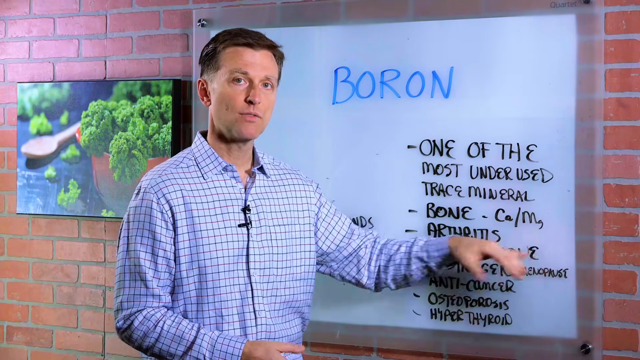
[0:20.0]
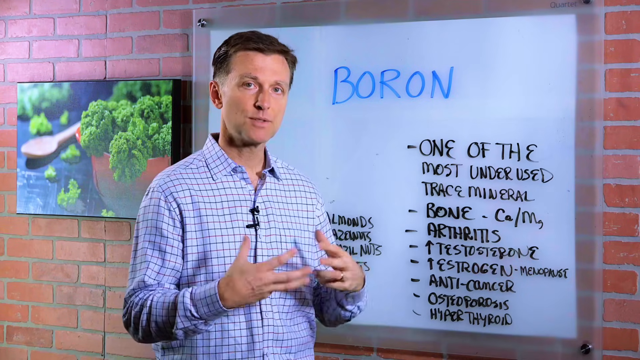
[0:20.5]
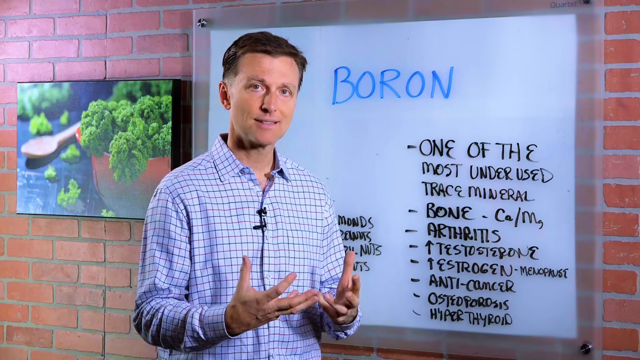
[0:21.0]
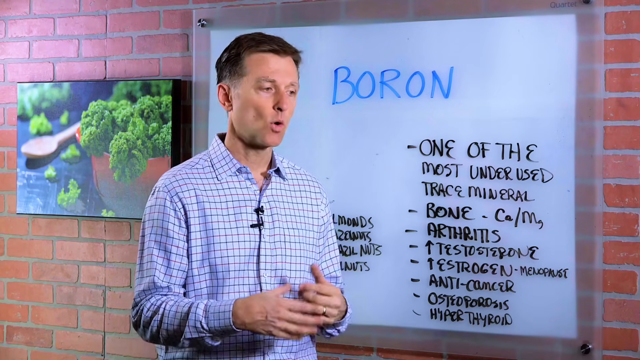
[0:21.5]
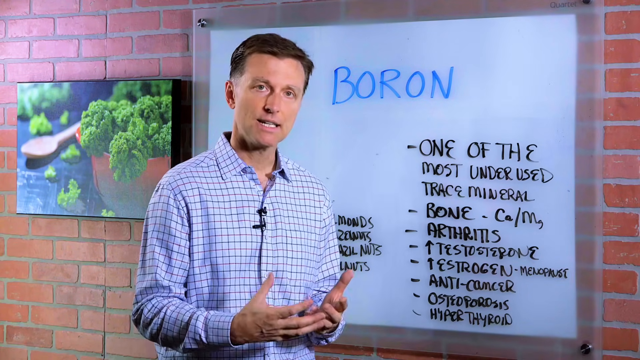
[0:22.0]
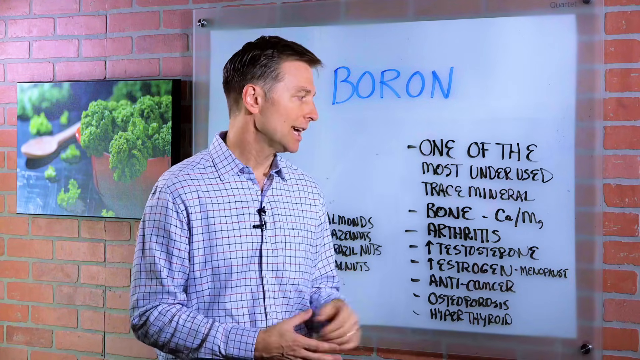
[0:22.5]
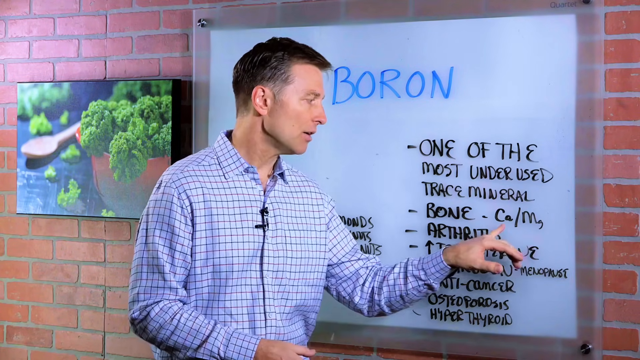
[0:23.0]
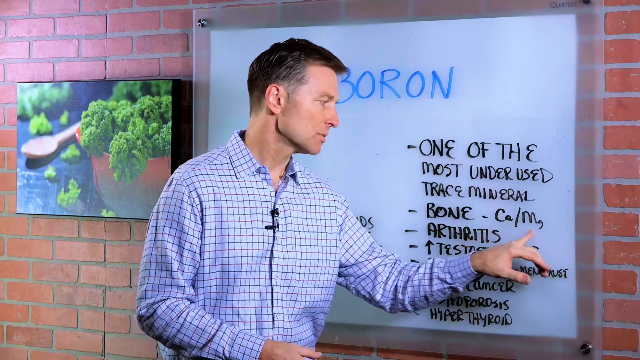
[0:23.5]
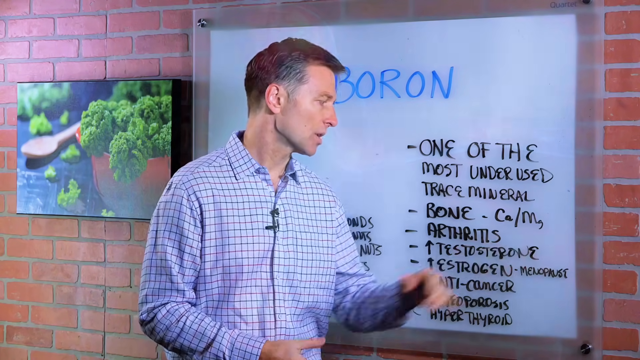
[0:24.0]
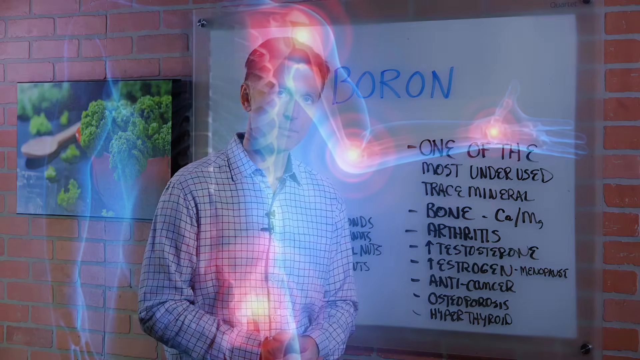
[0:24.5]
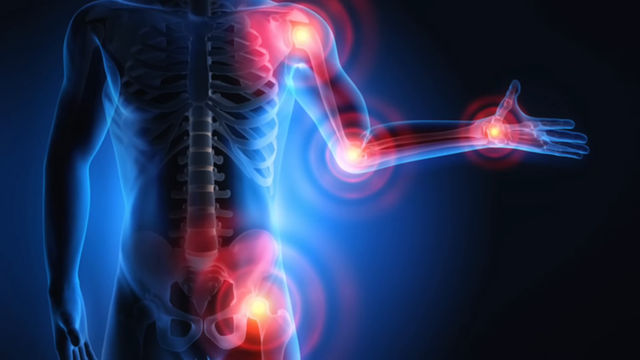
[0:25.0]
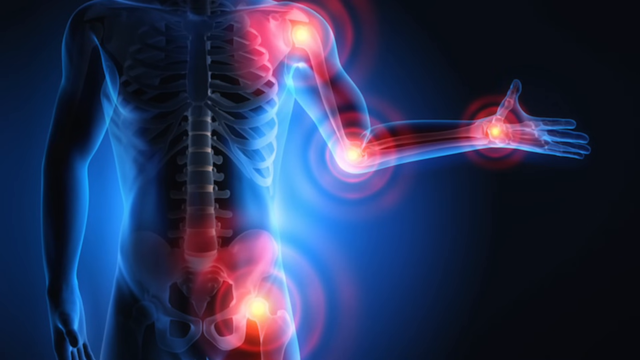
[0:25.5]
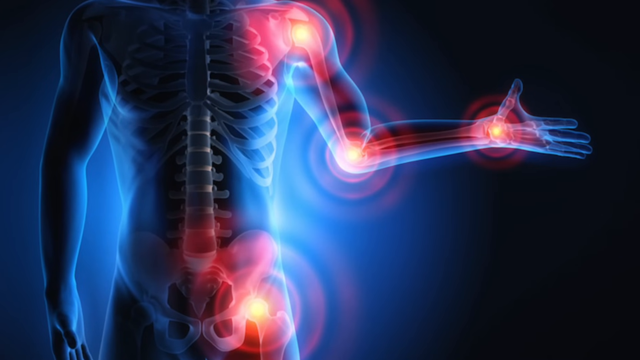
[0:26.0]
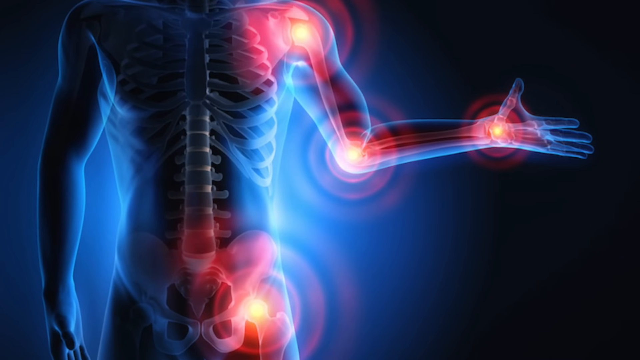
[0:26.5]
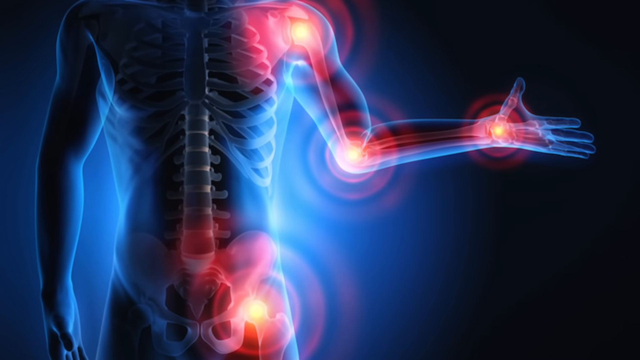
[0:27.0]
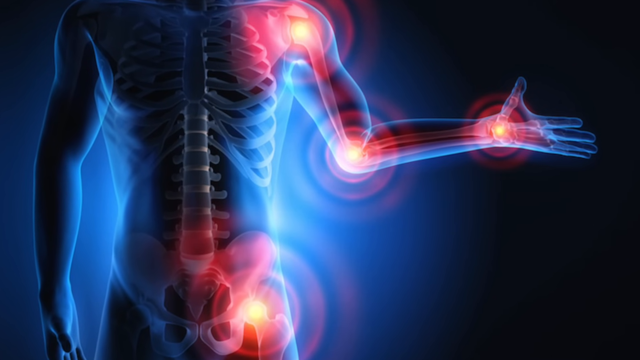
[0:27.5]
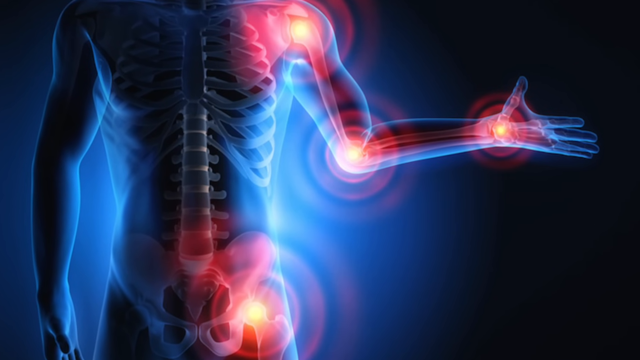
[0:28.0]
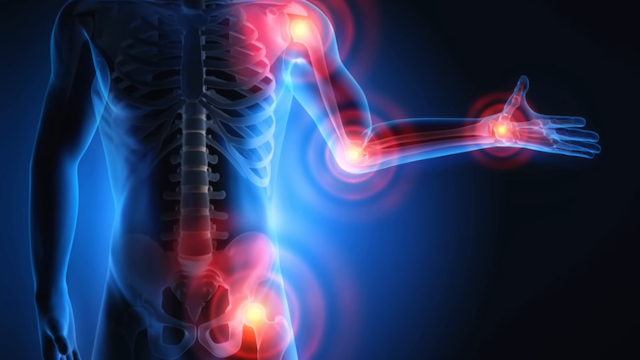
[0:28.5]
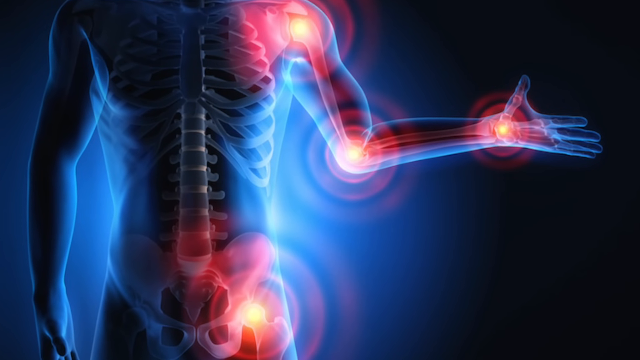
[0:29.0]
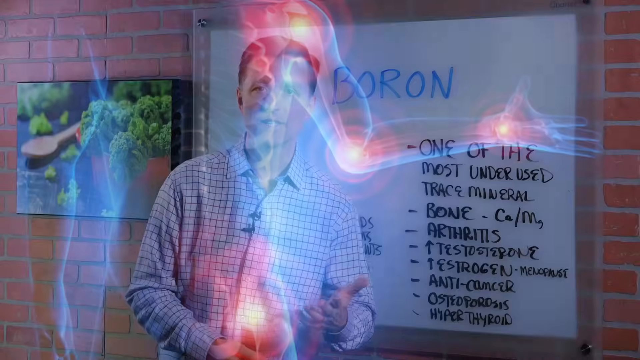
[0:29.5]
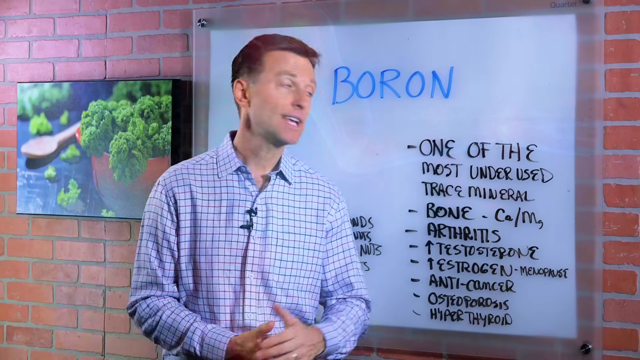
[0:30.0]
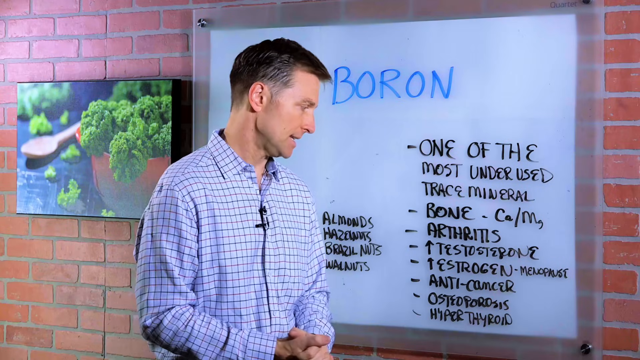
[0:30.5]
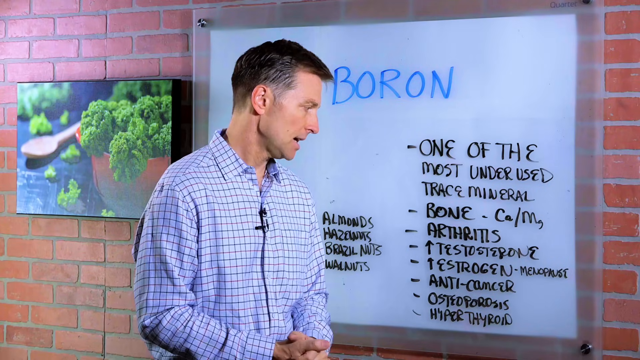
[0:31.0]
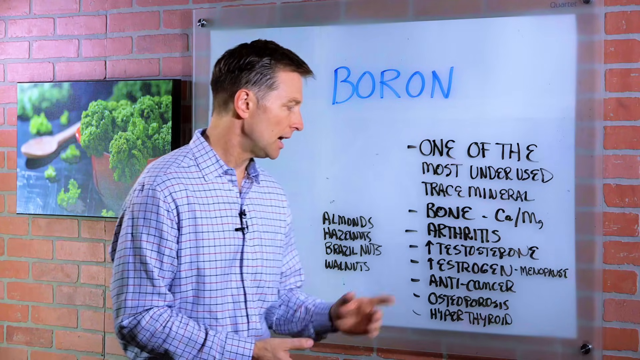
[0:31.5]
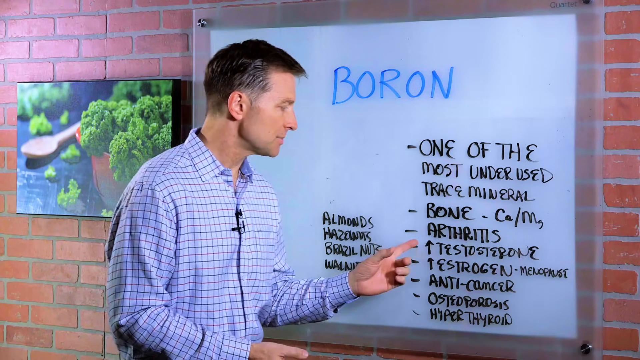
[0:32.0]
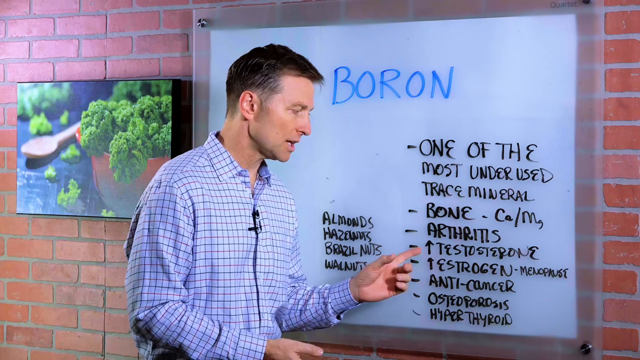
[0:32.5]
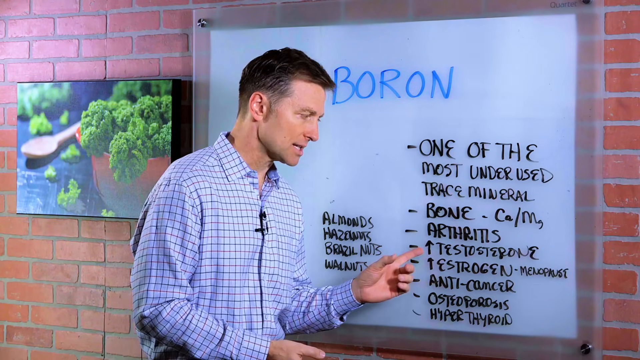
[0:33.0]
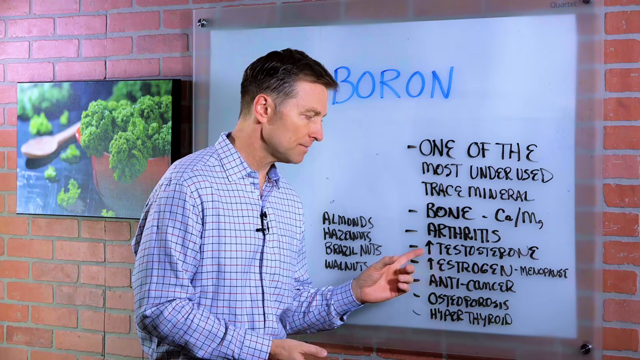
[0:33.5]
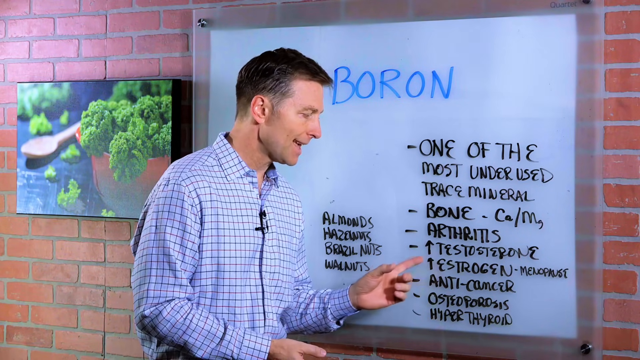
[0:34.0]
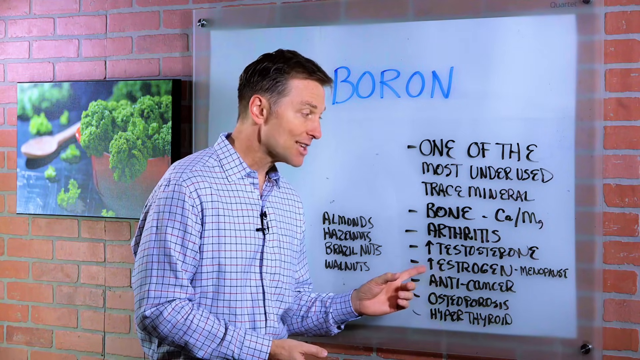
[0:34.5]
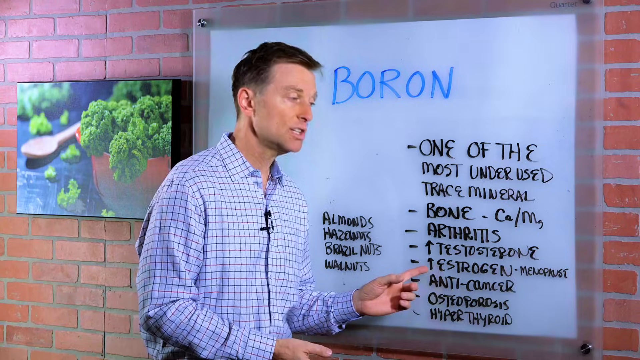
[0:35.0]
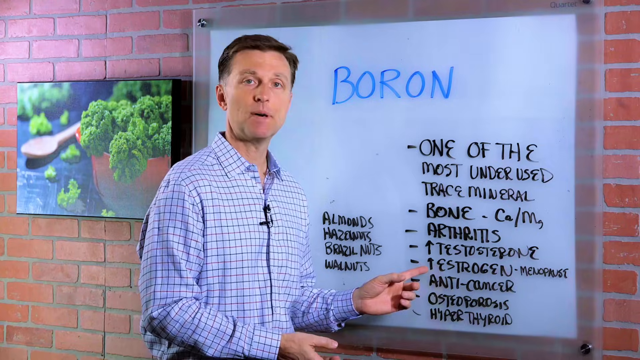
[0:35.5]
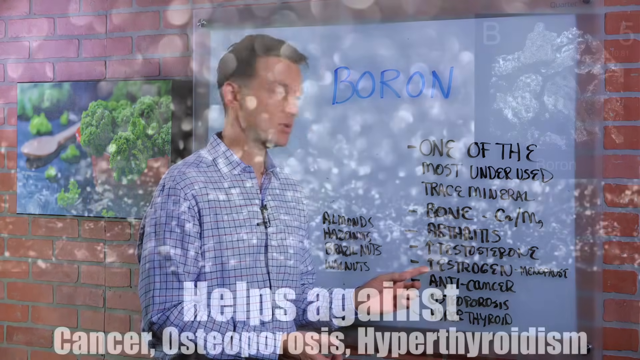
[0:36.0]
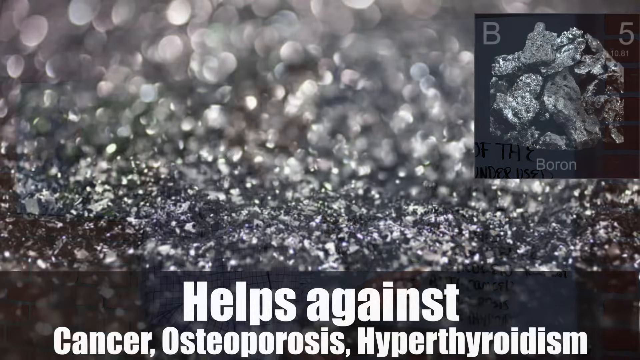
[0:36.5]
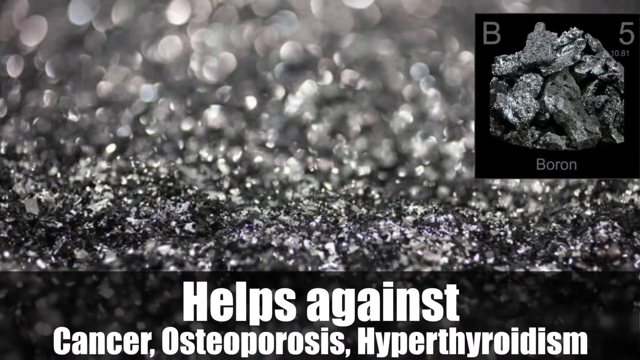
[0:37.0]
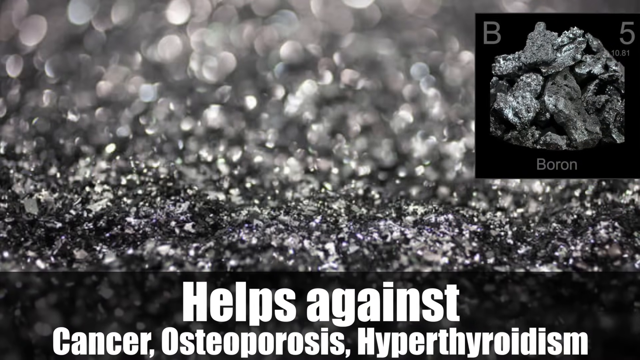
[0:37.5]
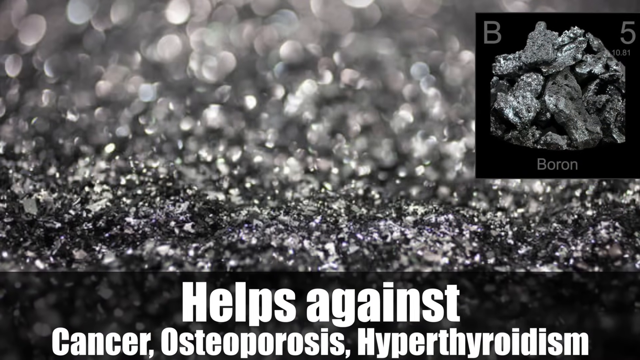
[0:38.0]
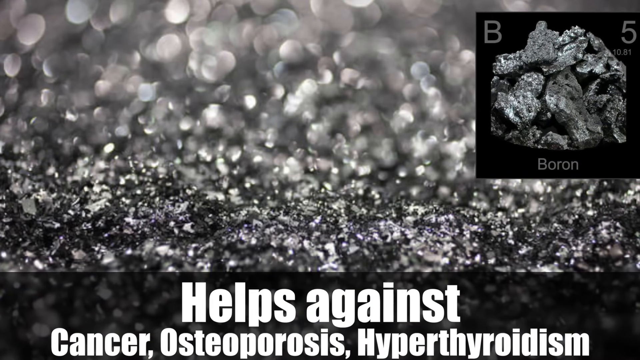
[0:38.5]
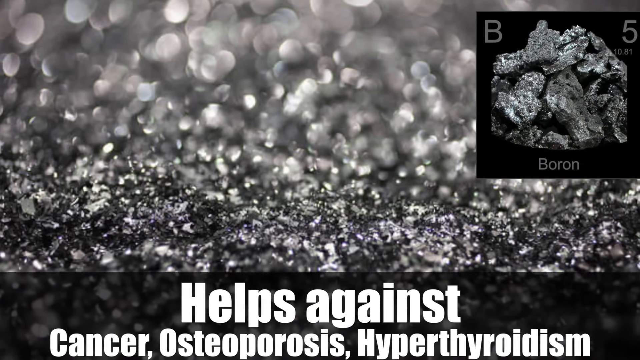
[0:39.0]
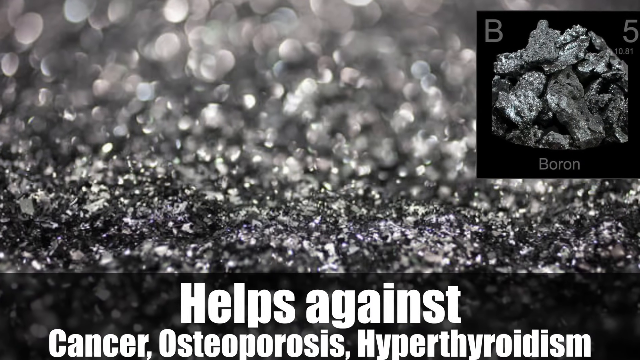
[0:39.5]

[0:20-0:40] A man stands in front of a white work board with the word "boron" written on it. The video cuts to an x-ray picture in which the bones can be seen through a person's skin; it shows different areas, with osteoporosis in the arm and in the shoulder. Then text says "helps us against cancer, osteoporosis, and hypothyroidism." On the white work board it says "one of the most underused trace minerals, boron," along with the words "bone," "arthritis," "testosterone," "estrogen," "anti-cancer," "osteoporosis," and "hypothyroid." In the background is a maroon brick wall. To the right of the board is a picture of a bowl of broccoli with a brown wooden spoon laying beside it. The video then cuts to a black screen that looks like crystals, apparently what boron looks like.